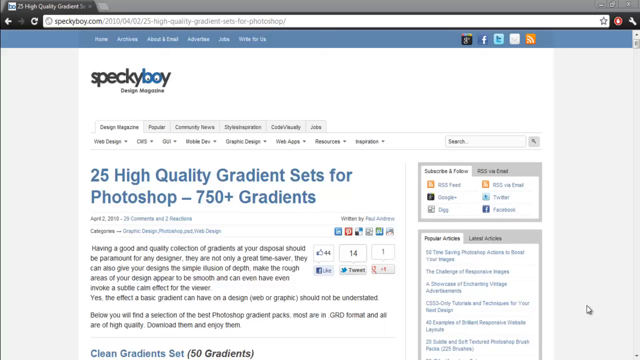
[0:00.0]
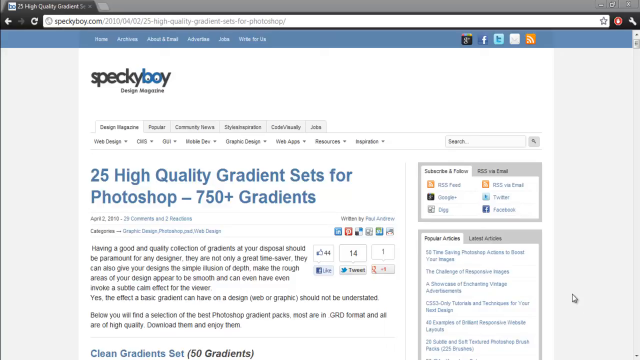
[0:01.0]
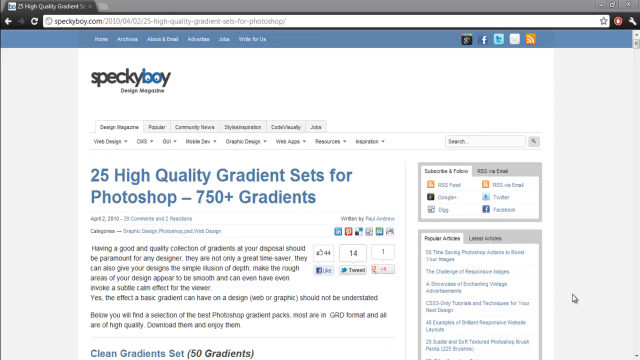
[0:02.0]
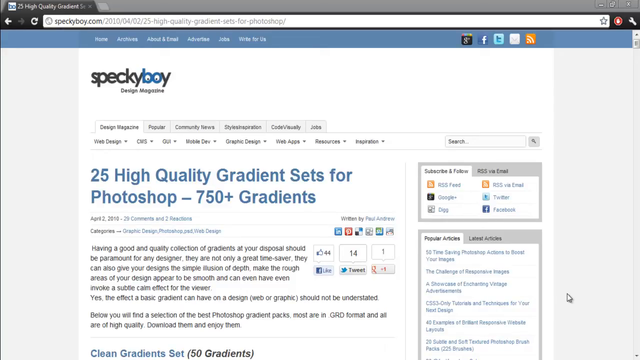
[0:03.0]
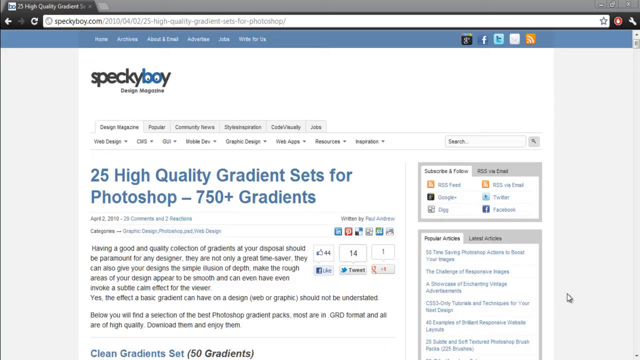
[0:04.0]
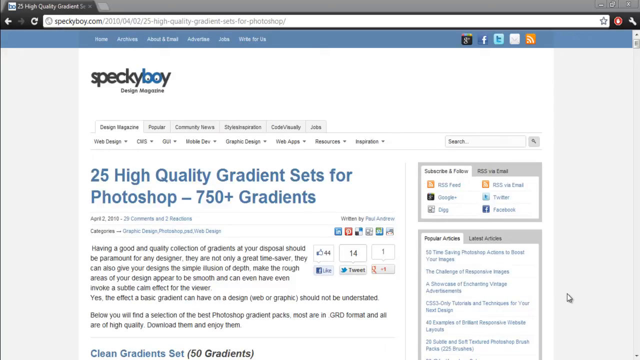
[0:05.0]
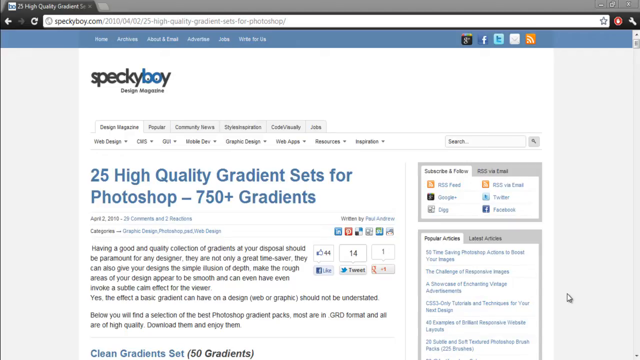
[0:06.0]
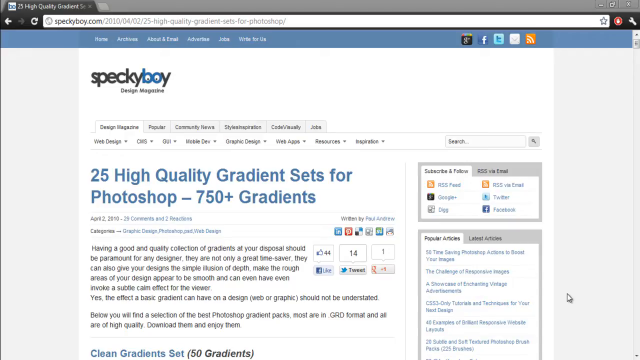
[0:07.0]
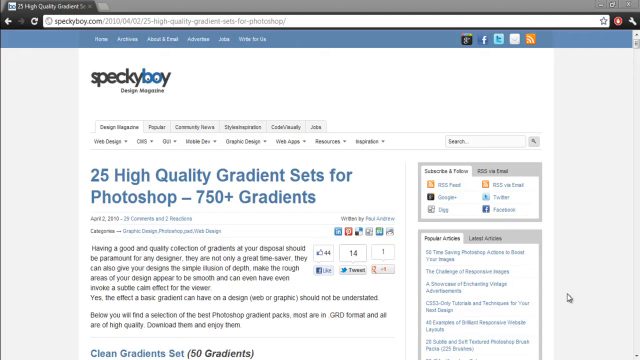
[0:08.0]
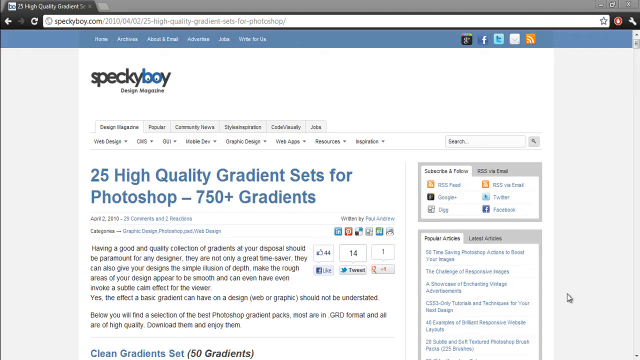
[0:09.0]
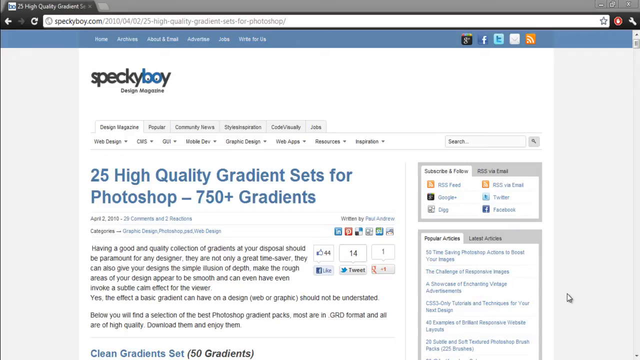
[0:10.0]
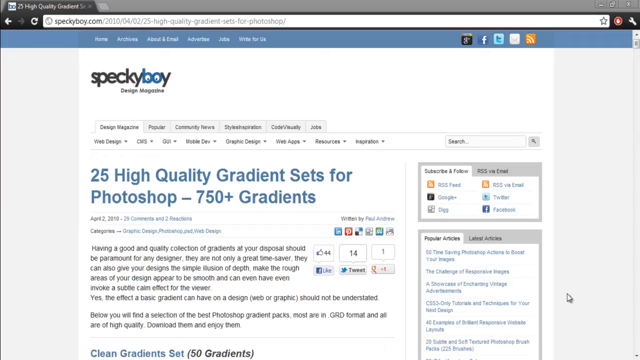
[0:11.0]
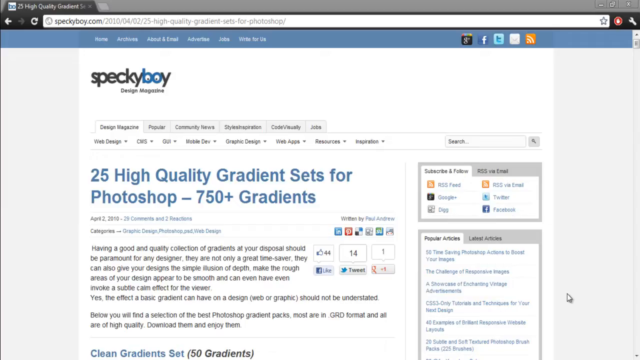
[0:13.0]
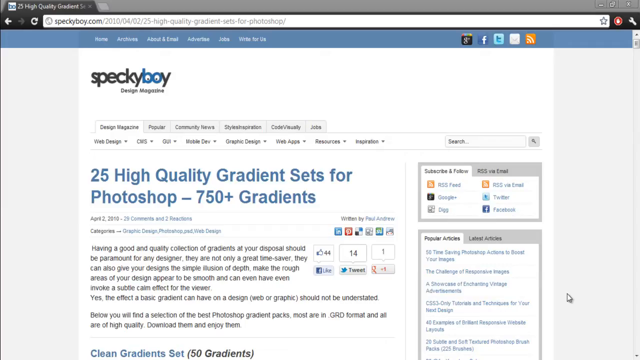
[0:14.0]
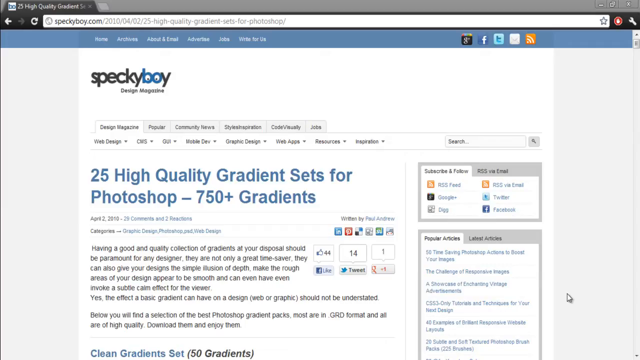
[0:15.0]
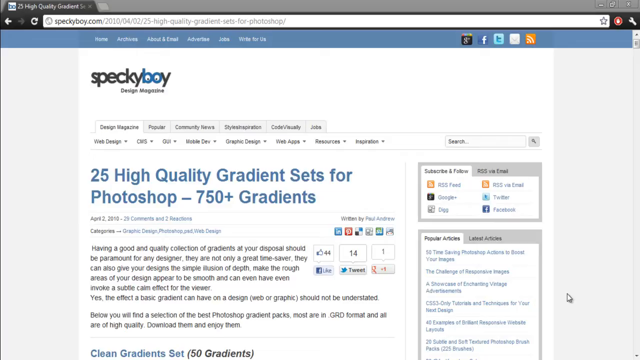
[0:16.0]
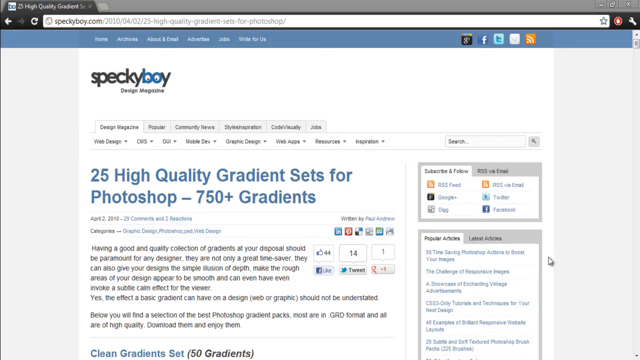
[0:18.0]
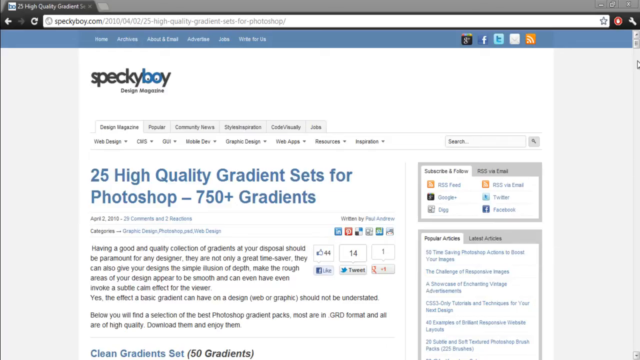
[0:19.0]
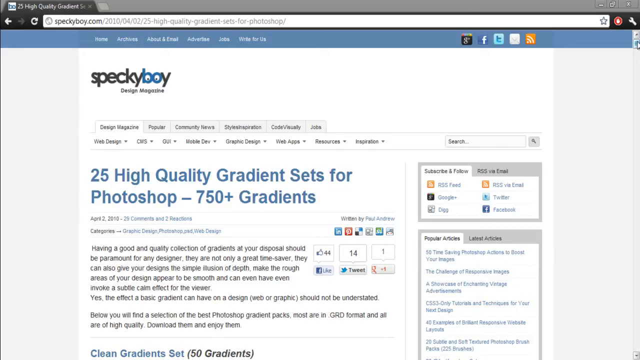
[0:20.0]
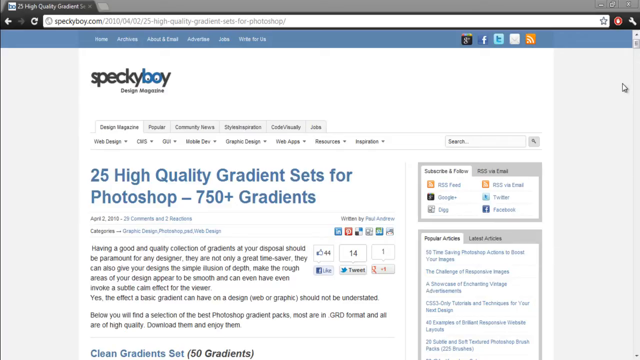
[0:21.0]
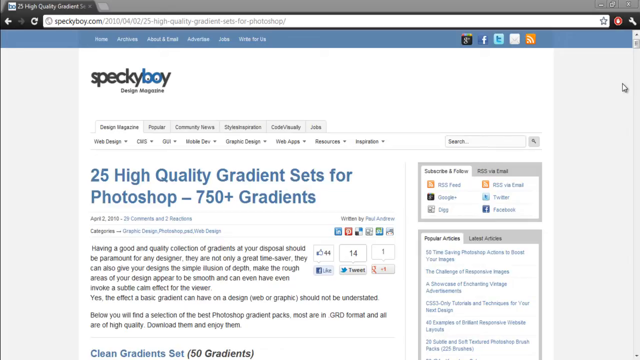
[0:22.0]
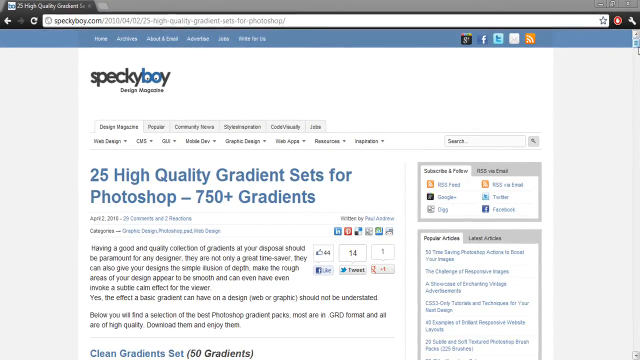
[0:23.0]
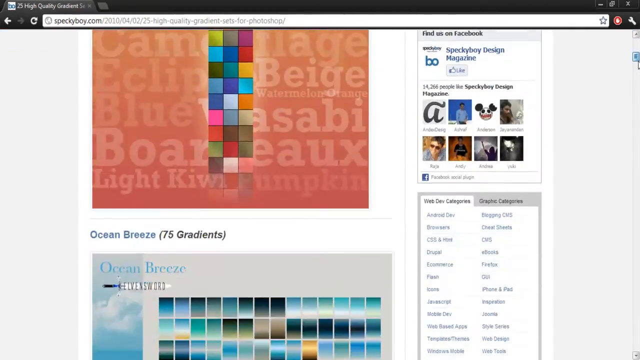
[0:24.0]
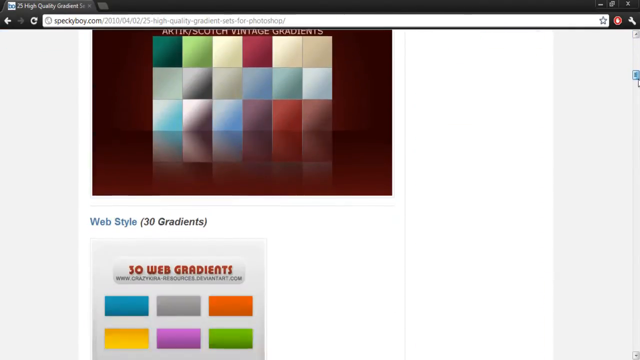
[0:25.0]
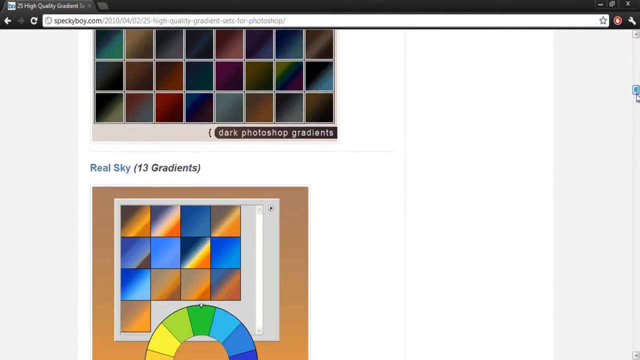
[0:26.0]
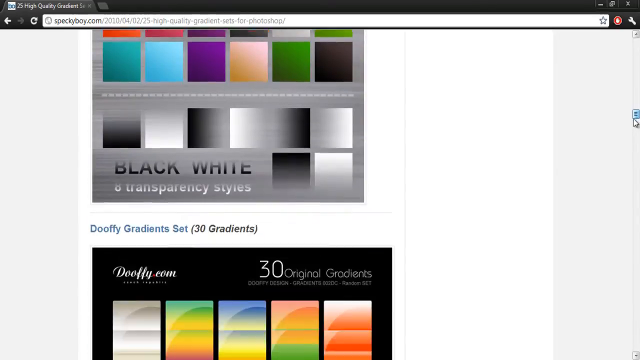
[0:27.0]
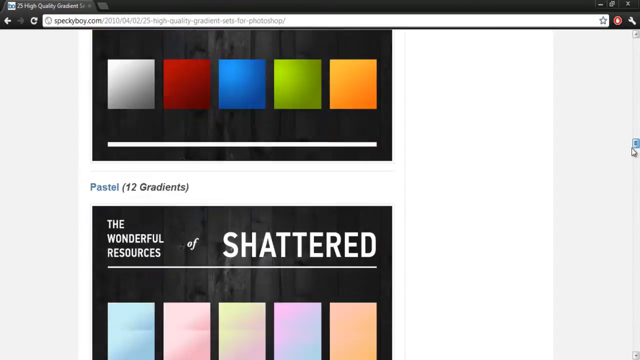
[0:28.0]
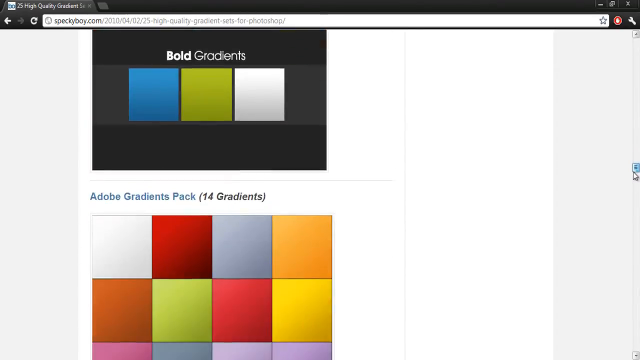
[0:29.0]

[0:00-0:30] A web page called Speckyboy.com is displayed. The page has a wide background and many features, including contact information at the top with Facebook, Twitter and other icons. A topic on the page reads "25 high-quality gradients set for Photoshop". Under this article, text says "having a good and quality collection of gradients at your disposal should be paramount to any design" and "They are not the only great time saver." The page then scrolls down to show different effects: colors in small grids, with different categories of colors.